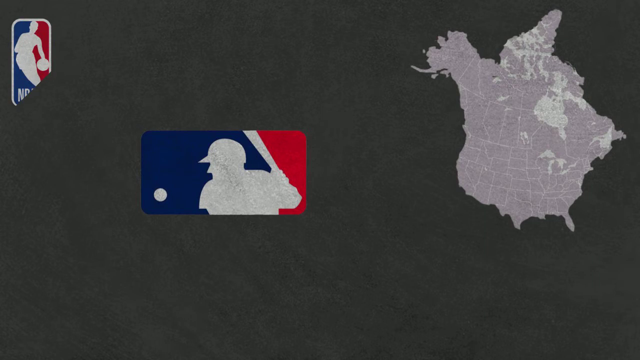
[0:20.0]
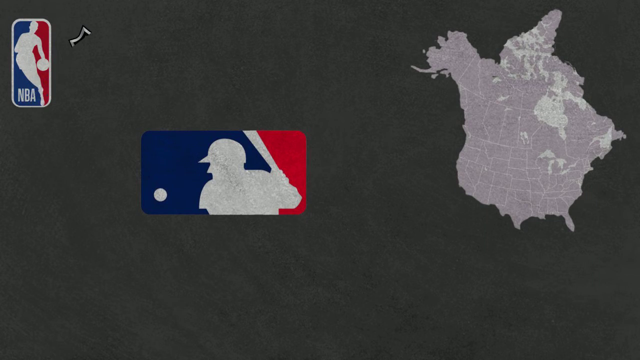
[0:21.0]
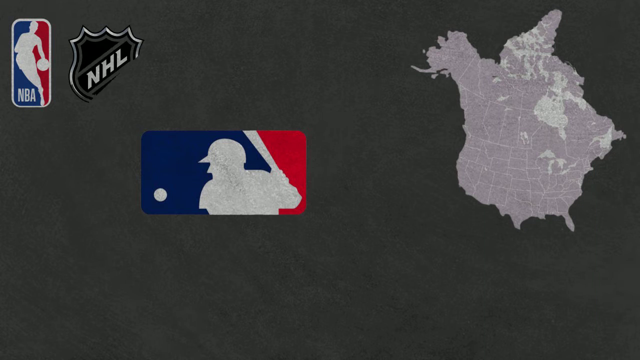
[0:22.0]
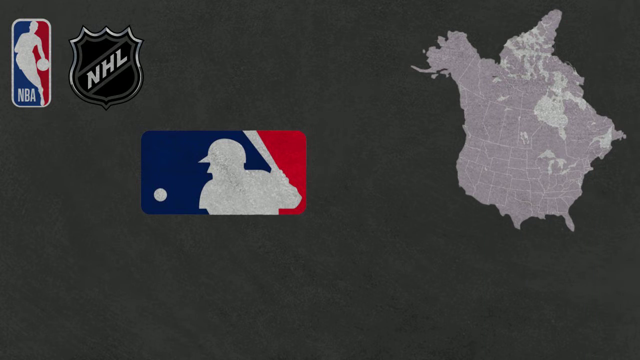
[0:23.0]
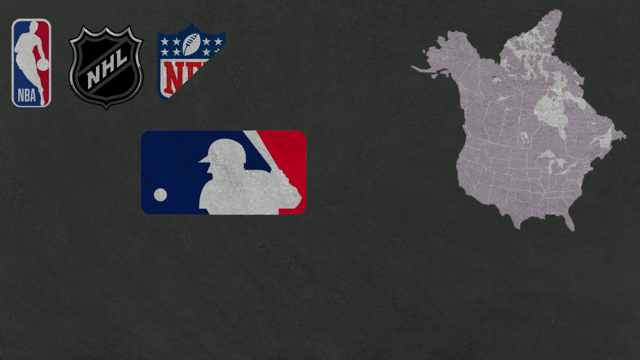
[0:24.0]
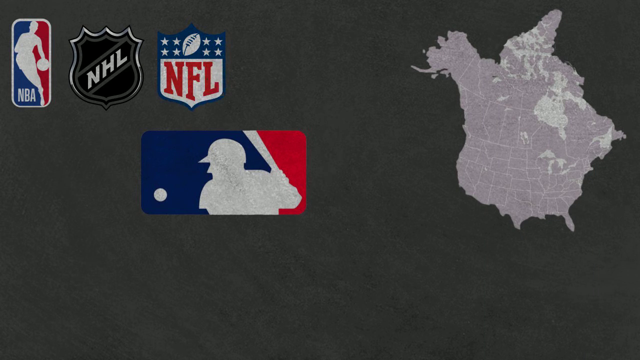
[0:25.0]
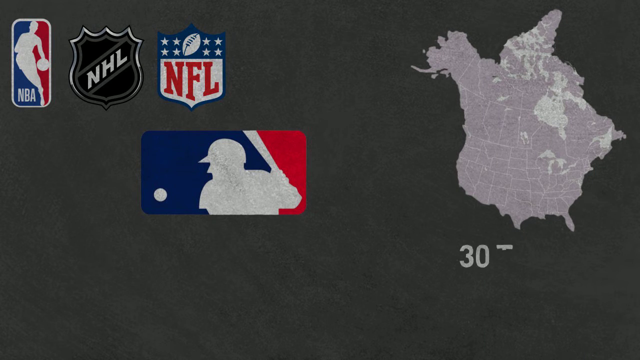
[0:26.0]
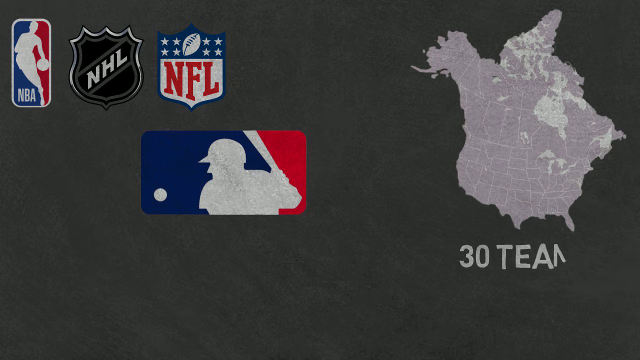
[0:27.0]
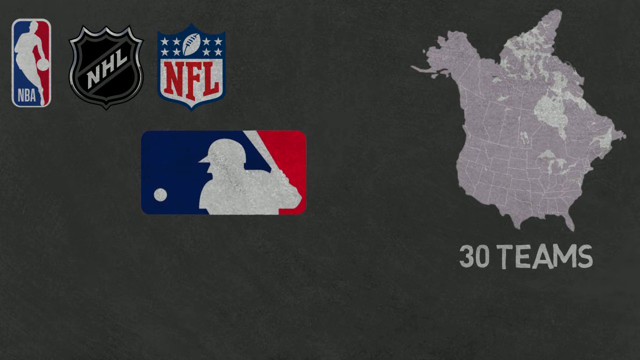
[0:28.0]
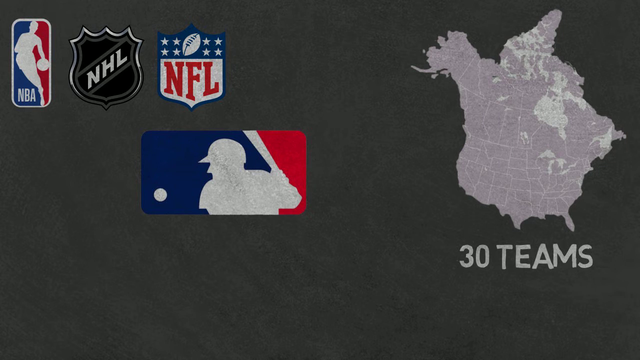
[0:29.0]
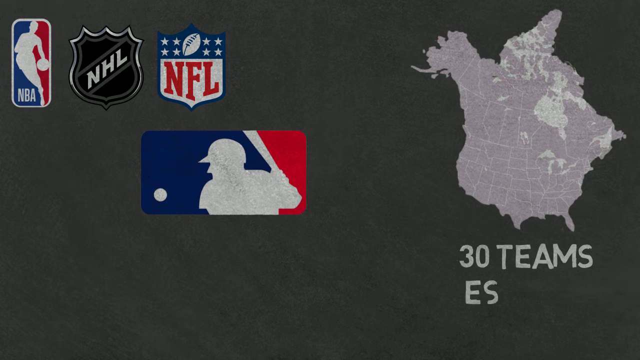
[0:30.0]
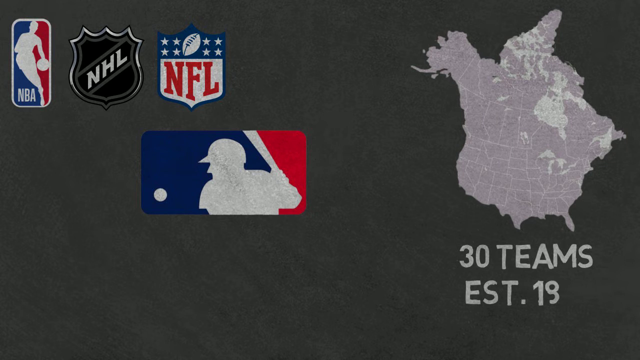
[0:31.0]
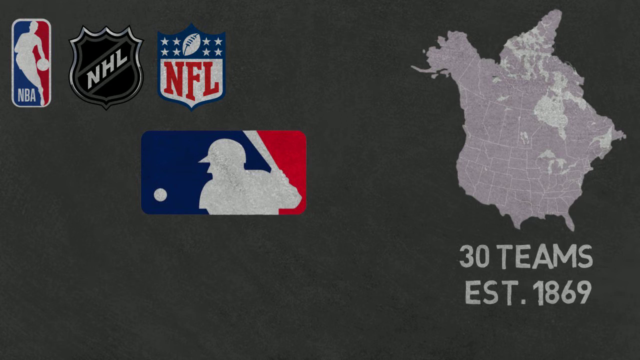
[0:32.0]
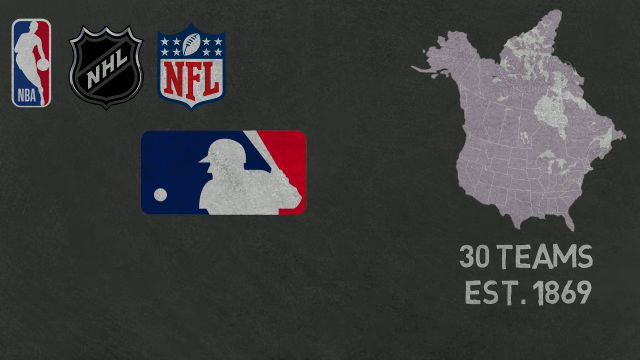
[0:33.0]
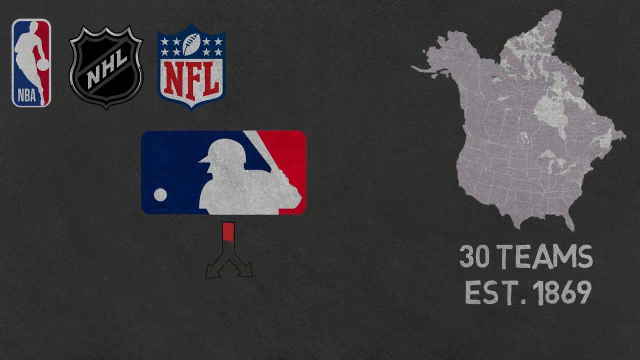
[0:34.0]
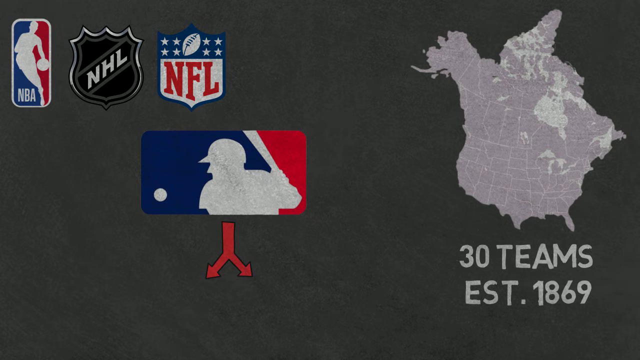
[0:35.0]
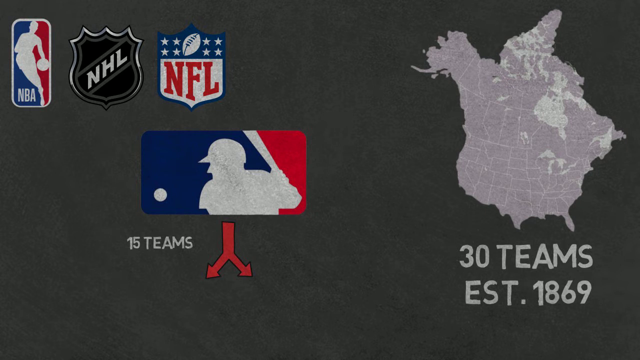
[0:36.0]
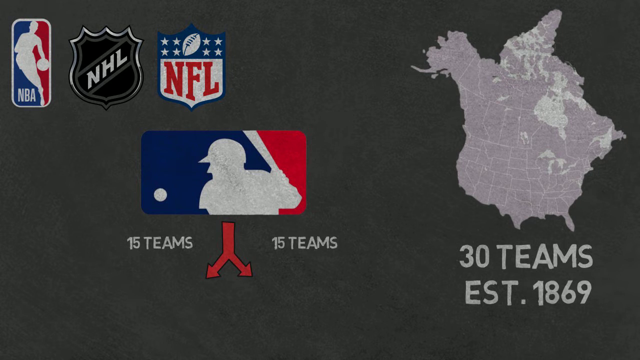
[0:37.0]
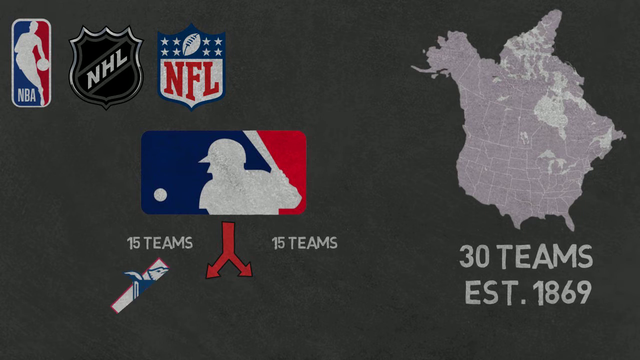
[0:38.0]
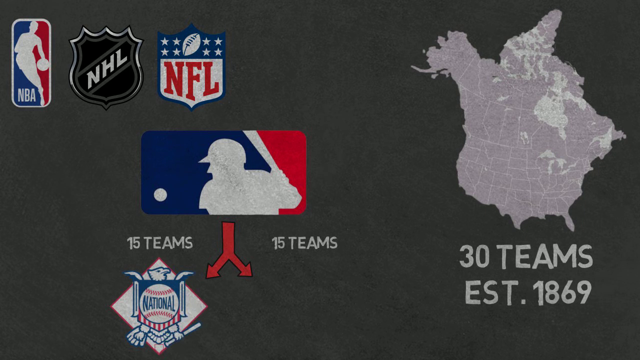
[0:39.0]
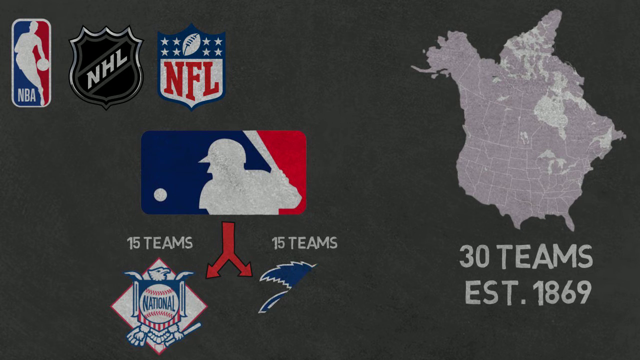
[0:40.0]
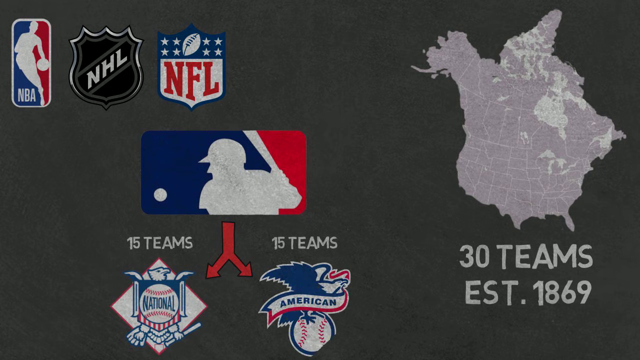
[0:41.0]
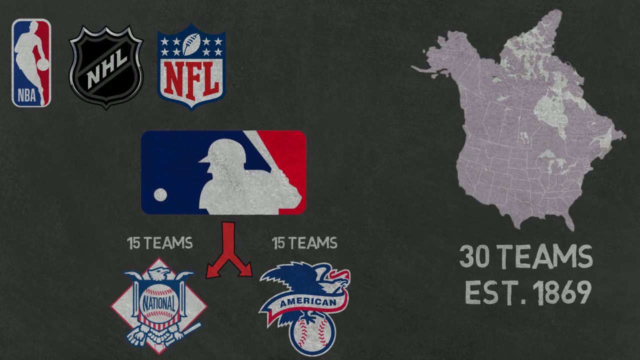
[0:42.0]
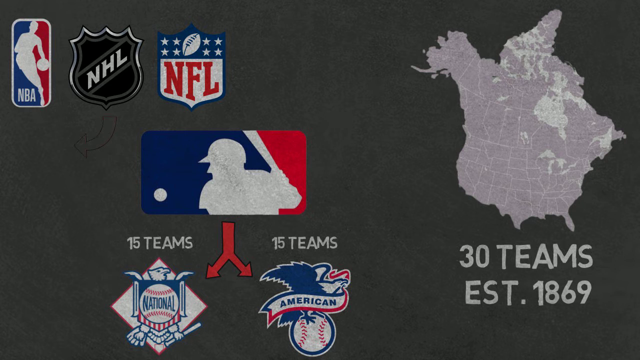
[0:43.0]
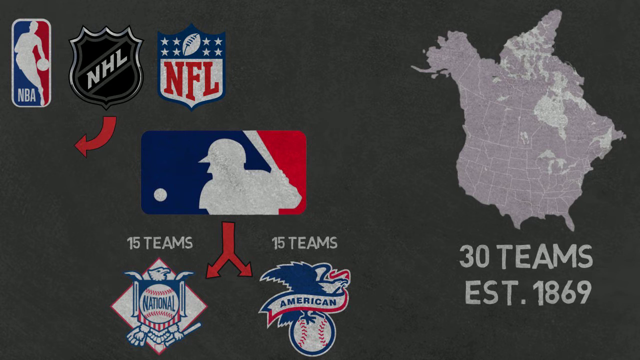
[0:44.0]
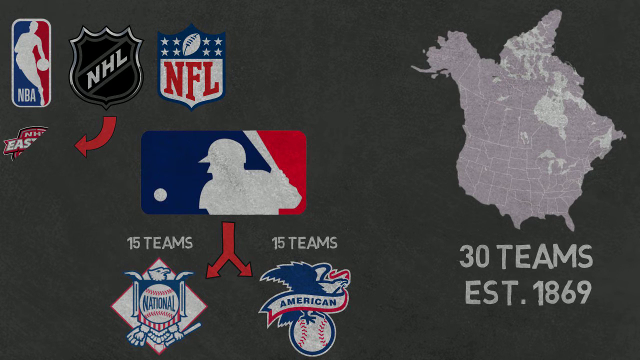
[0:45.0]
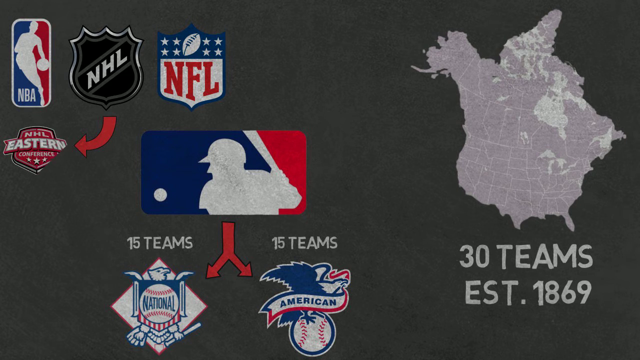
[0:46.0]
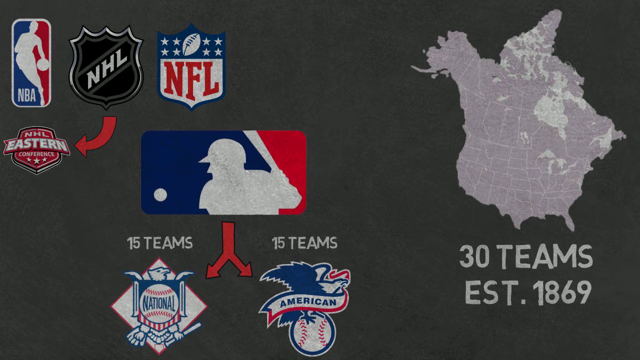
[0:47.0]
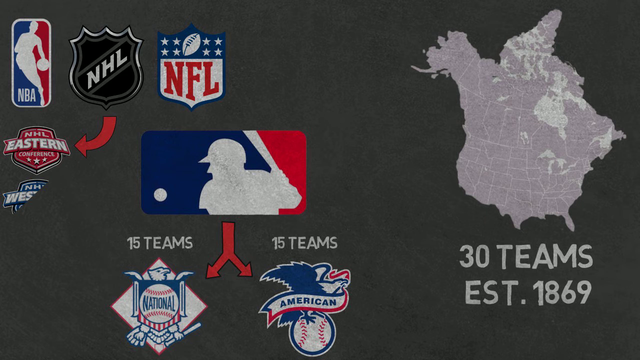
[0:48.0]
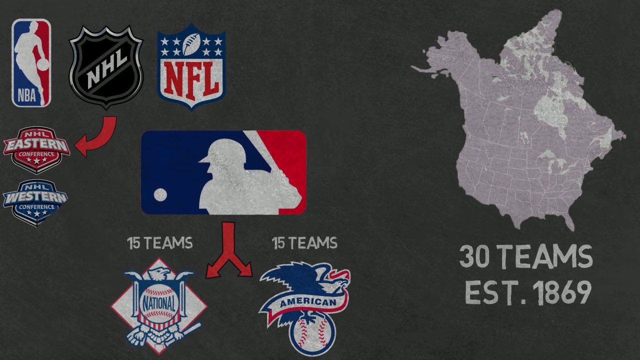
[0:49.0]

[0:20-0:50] Different professional sports logos appear on a map that shows only Canada and the U.S., with Mexico cut out. A large MLB logo is in the middle, the NBA logo is in the very top left, the NHL logo is animated in on the right, and the NFL logo is on the right side. Underneath the map, text reads "30 teams established 1869". From the MLB logo, an arrow is drawn branching out to two sides, with text saying there are 15 teams: on the right side is a picture of an eagle labeled "American", and on the left side one labeled "National". The NHL also branches out into two conferences, labeled "Western Conference" and "Eastern Conference". The NBA and the NFL are not branched out.